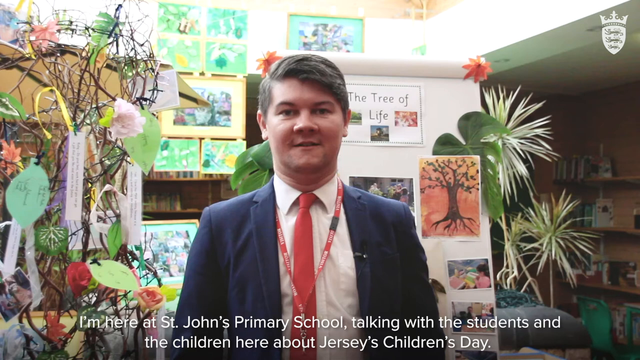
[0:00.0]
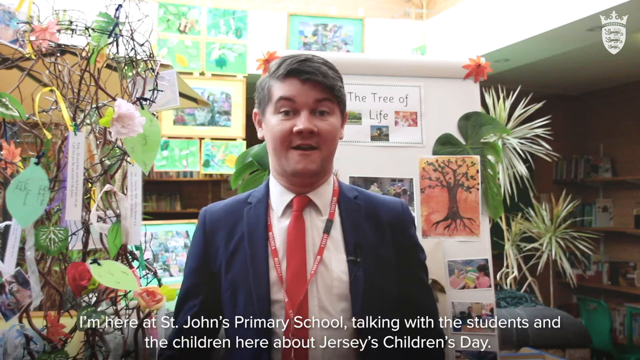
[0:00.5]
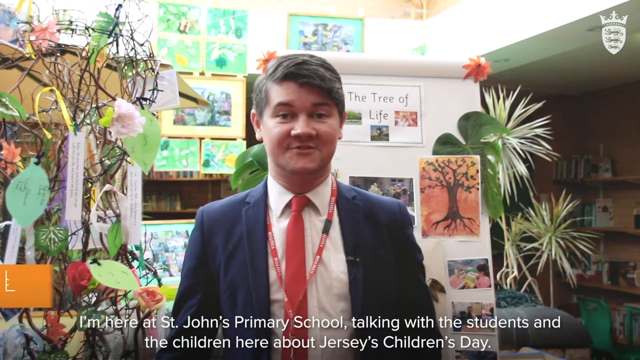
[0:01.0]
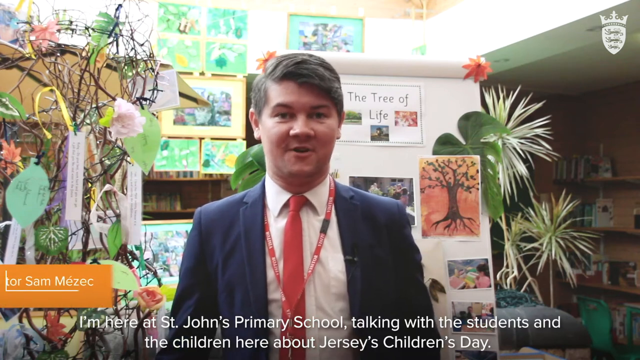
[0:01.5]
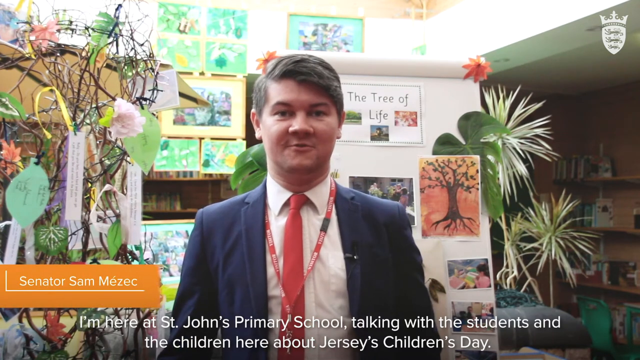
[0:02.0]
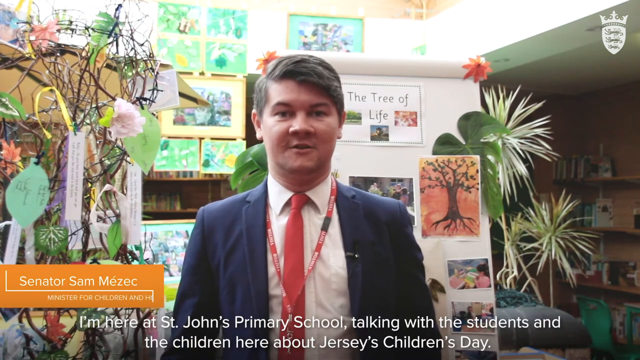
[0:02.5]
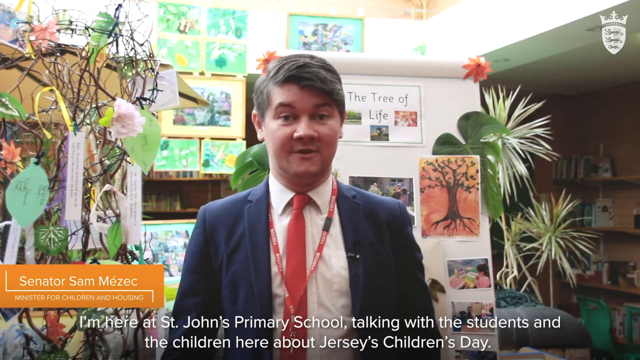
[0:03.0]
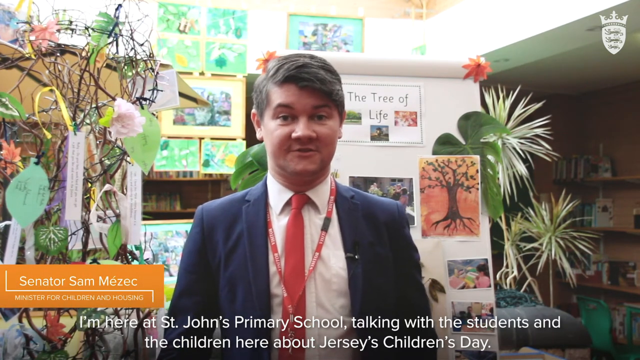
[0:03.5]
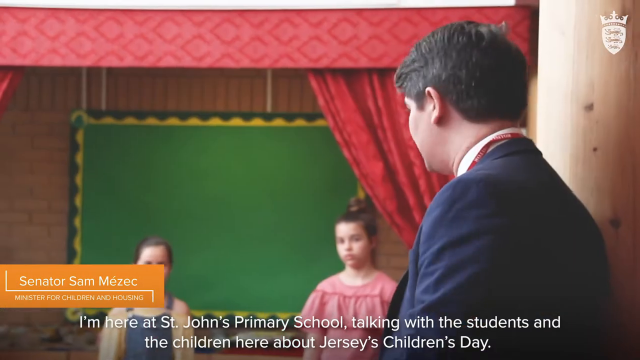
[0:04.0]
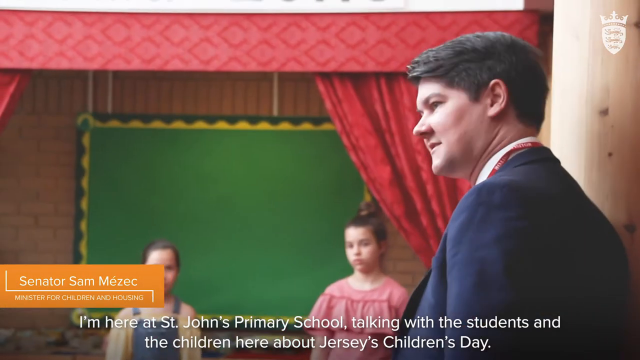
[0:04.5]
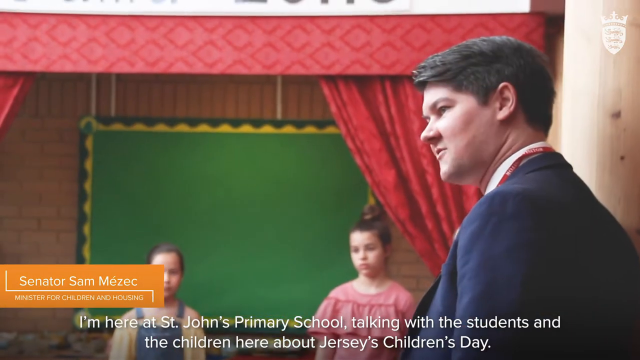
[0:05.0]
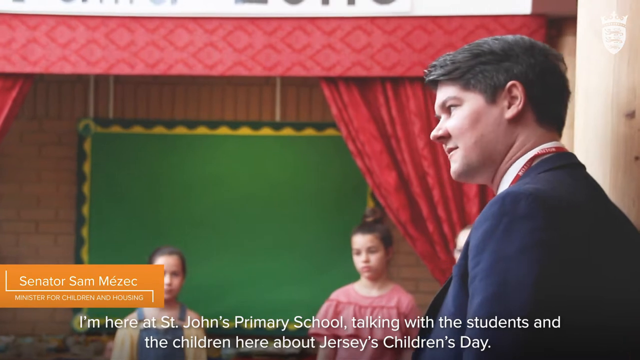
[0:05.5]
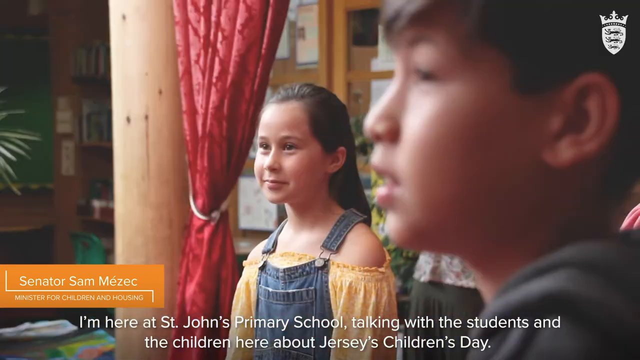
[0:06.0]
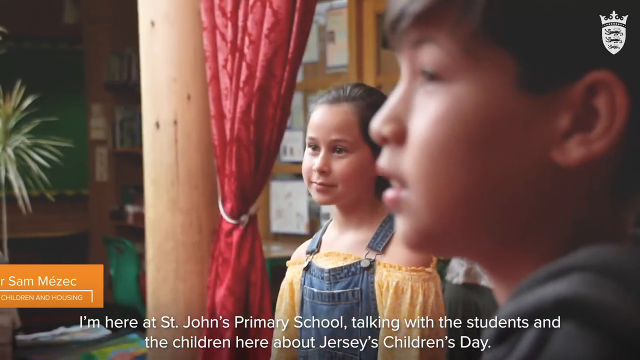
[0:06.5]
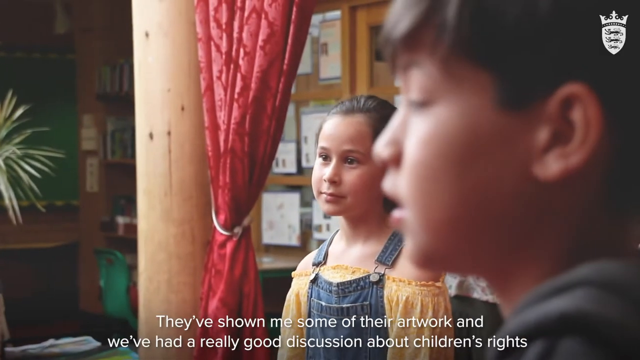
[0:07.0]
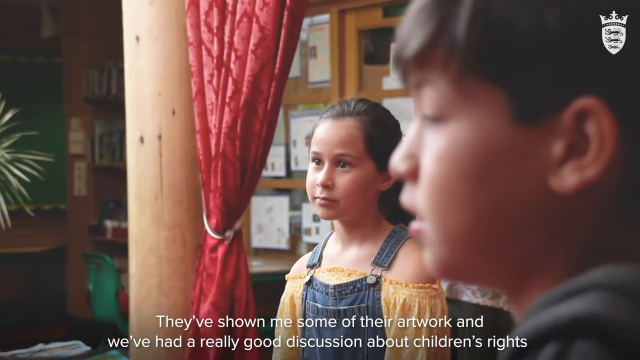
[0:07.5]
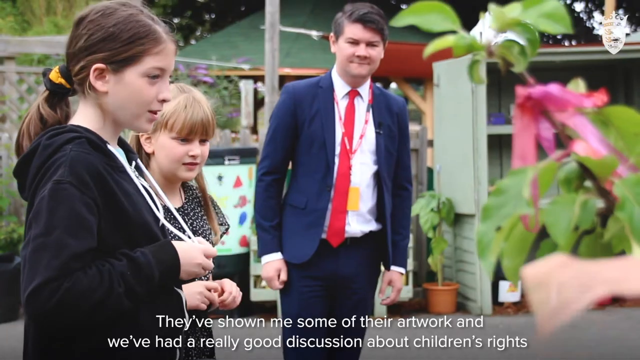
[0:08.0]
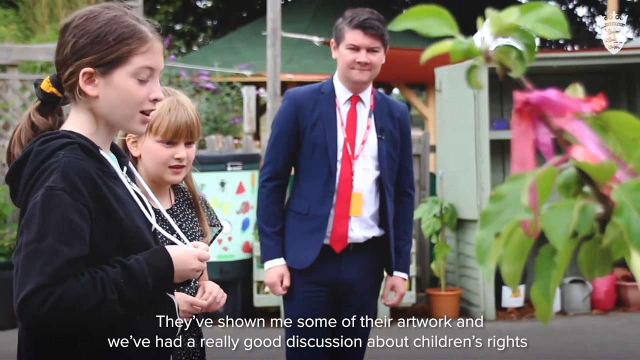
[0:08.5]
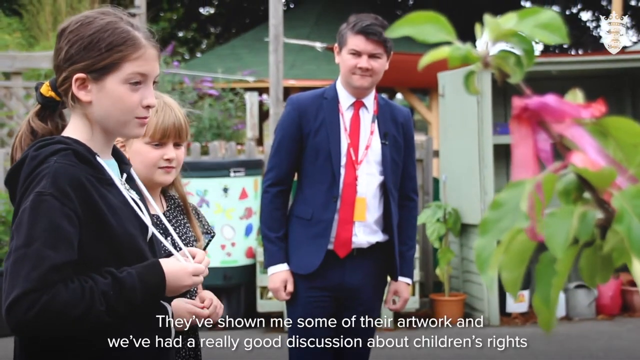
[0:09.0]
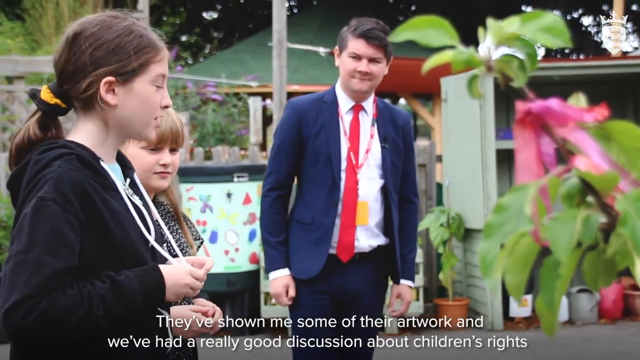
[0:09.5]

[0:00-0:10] A person in what appears to be a suit and tie is talking, apparently a representative explaining a process to the camera, and seems to be talking to children. In the bottom left there is an orange, name-marker-like graphic. The setting seems to be Saint John's primary school, and it is Jersey's children's day, so it appears to be some kind of event at the school, possibly a charity or promotional event.